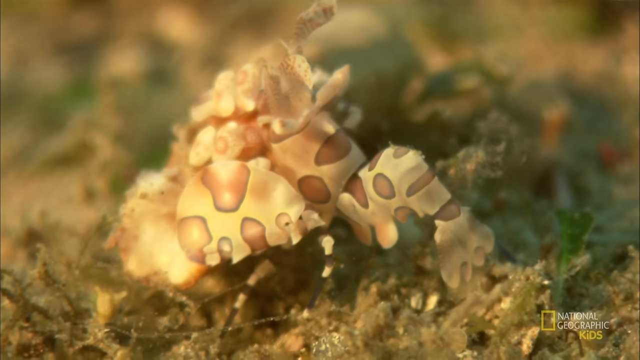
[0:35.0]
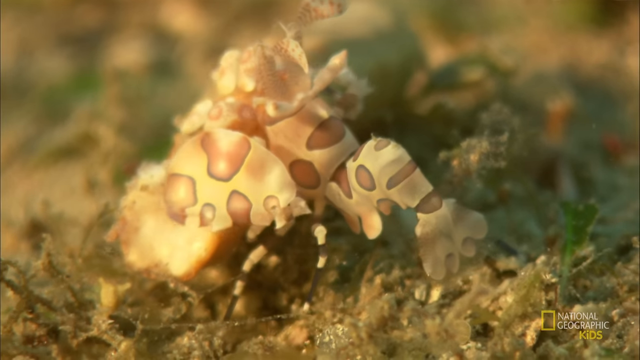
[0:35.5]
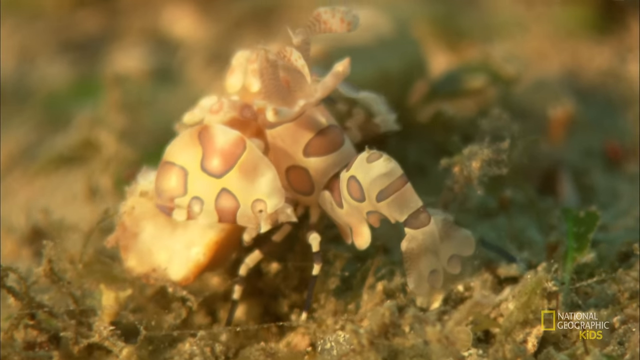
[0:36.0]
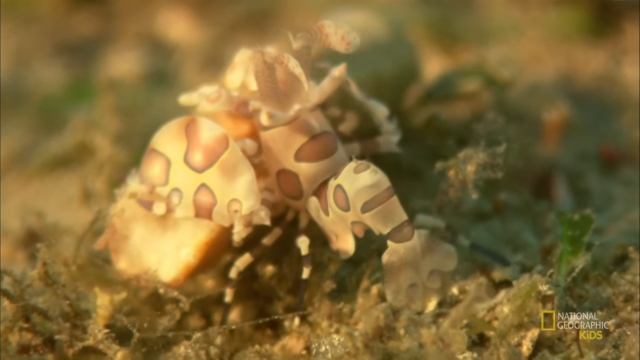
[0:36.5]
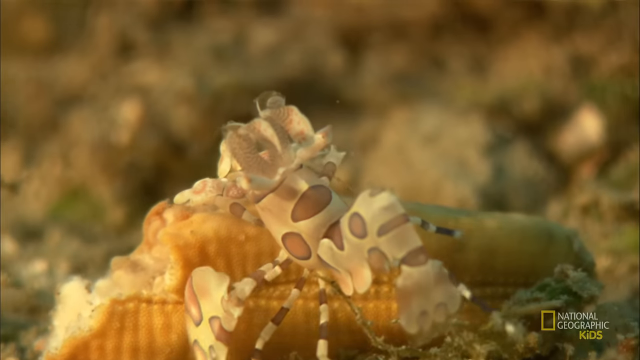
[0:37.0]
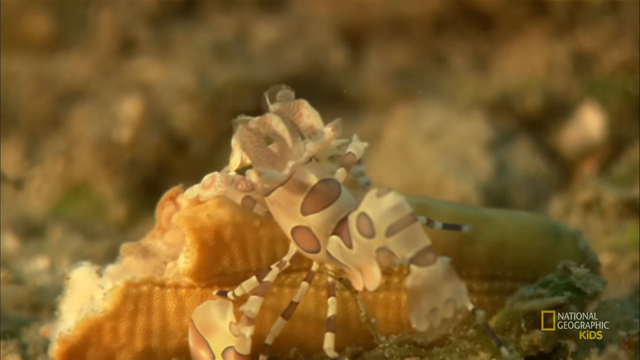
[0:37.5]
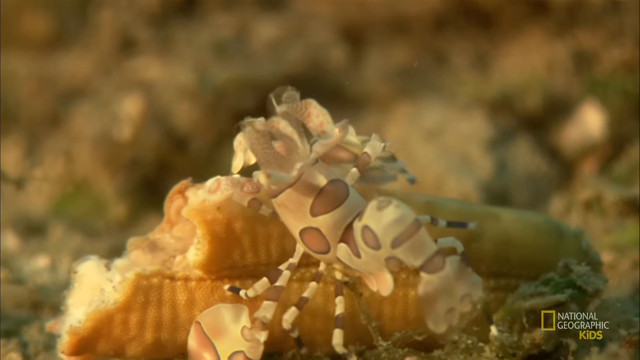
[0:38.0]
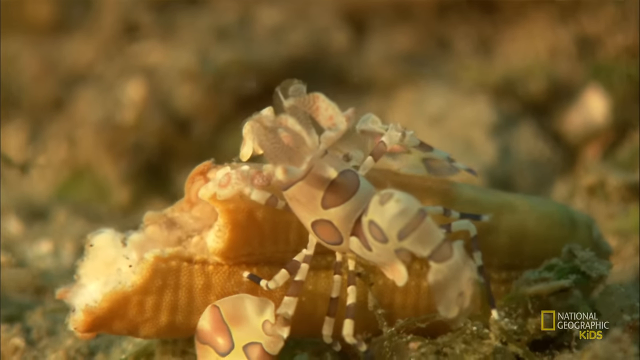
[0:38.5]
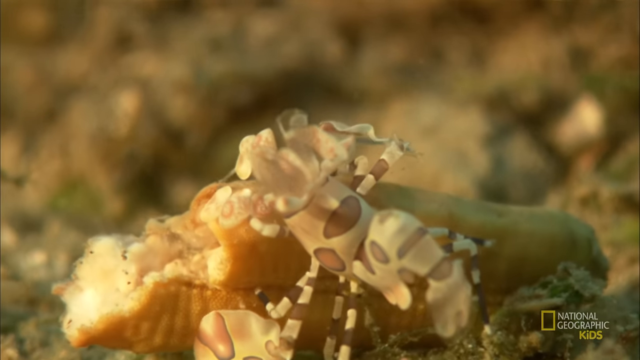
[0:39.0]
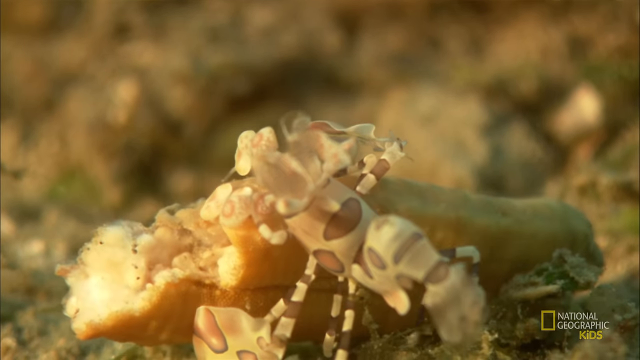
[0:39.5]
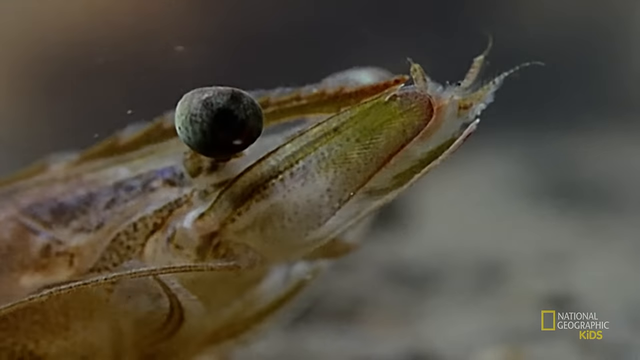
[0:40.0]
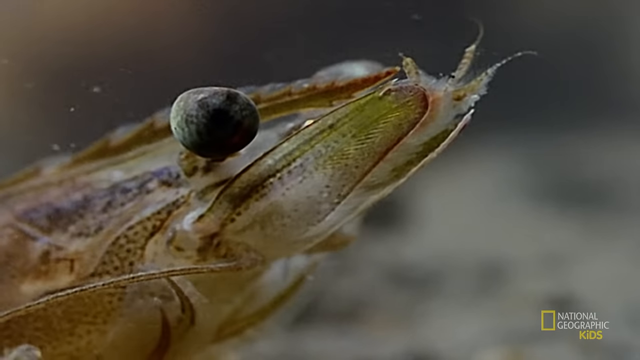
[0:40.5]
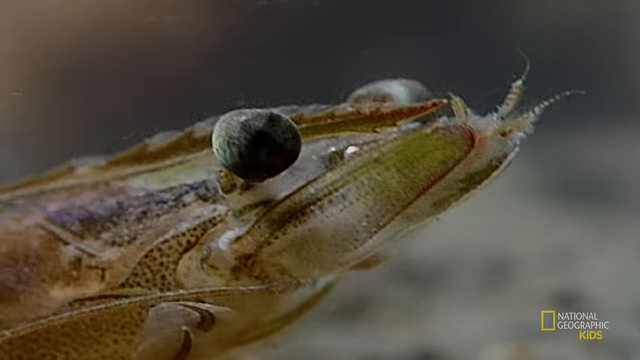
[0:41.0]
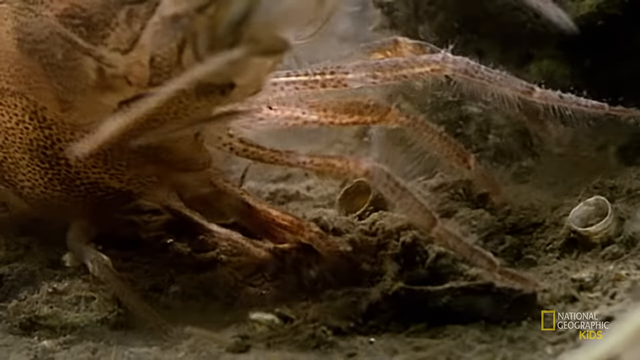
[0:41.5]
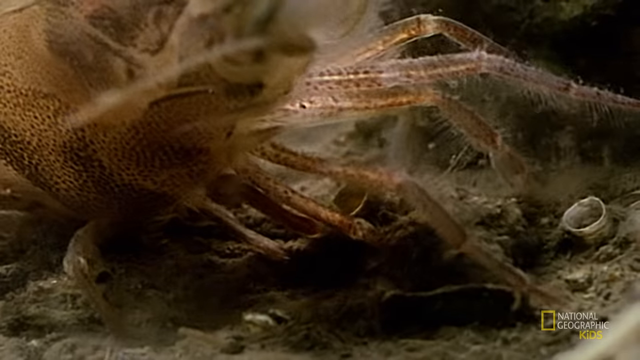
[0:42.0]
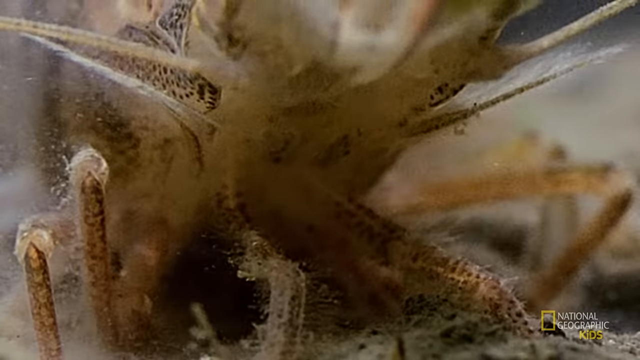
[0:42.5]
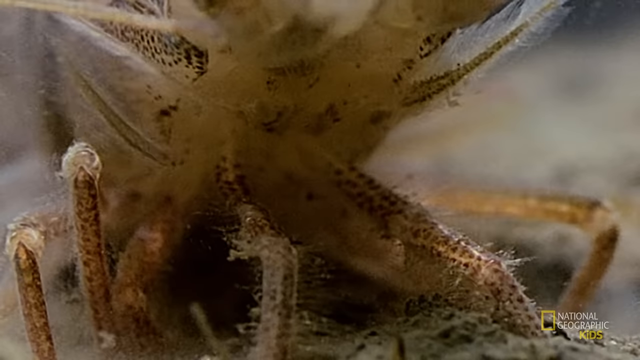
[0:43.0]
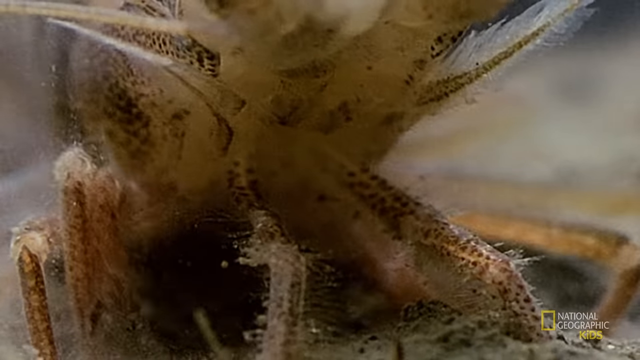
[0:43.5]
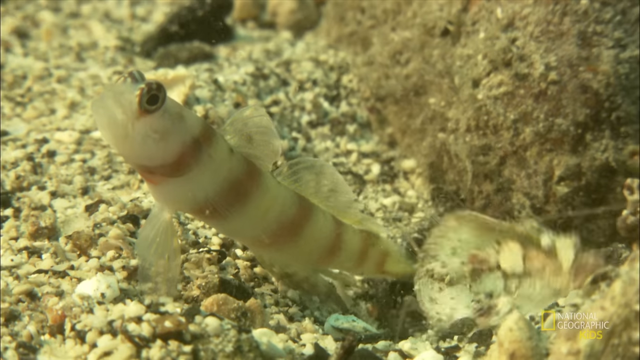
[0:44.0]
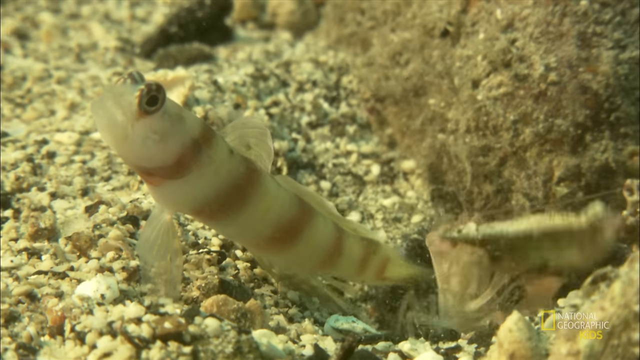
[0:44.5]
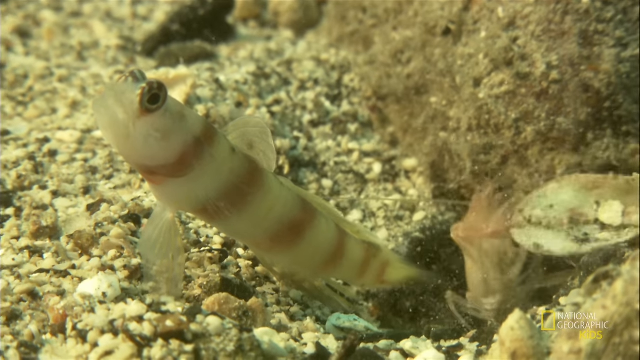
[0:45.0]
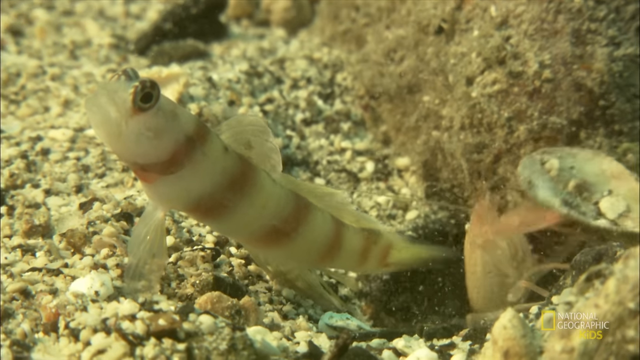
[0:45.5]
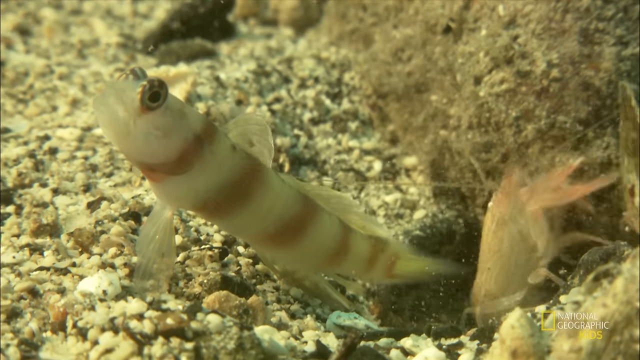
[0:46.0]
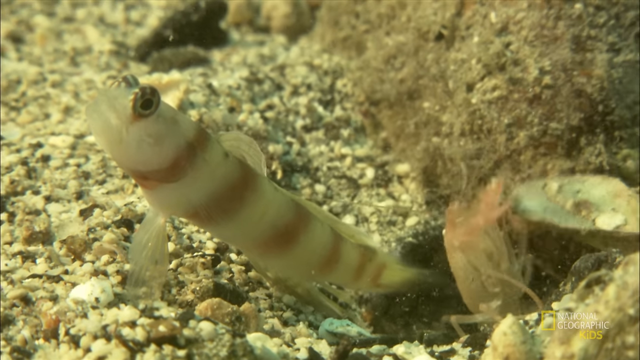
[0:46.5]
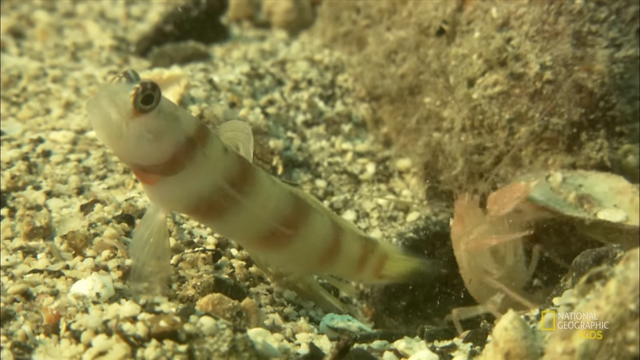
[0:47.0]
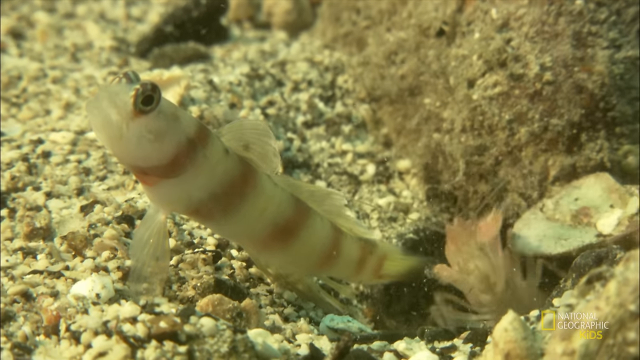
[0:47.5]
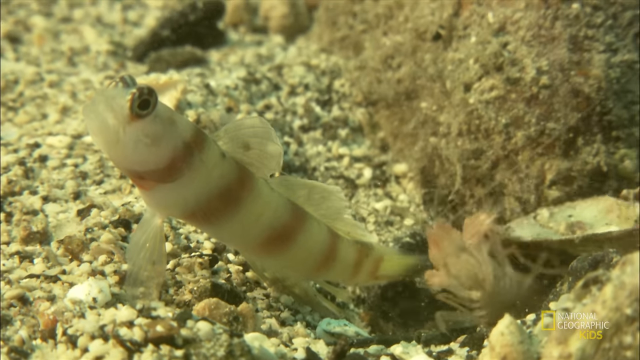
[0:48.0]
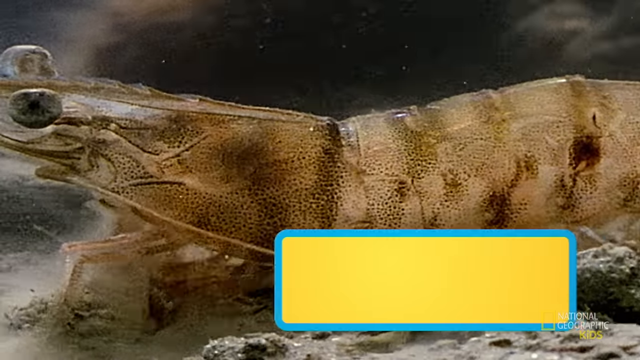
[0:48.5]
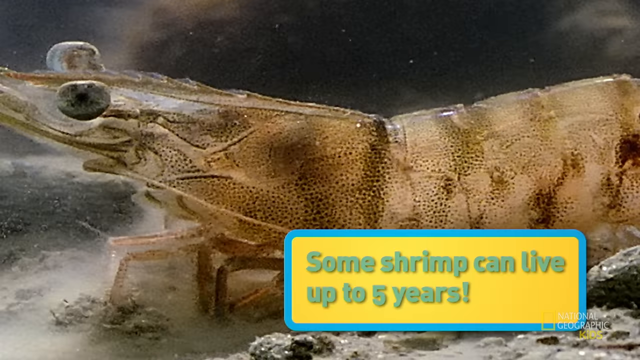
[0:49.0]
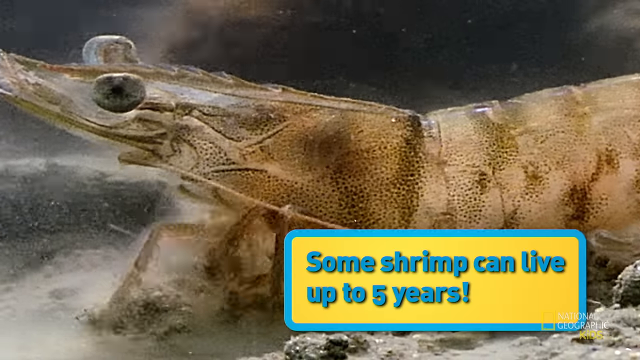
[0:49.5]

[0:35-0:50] At the bottom of the ocean, the shrimp comes tunneling up from underneath the ground. Other little spidery-looking sea creatures with black splotches on their bodies are also there. The shrimp tries to move something like a shell out of the dirt, as if eating it, and places it in its mouth; its underside is visible between its many legs. The thing it is eating looks almost like a piece of French bread in appearance and texture. One shrimp sits on the ocean bottom with its legs going up and down in the dirt as if feeling for something, not moving fast, while the one moving the shell moves its legs rapidly as it eats and digs. A tiger-like-looking shrimp sits by the one digging.